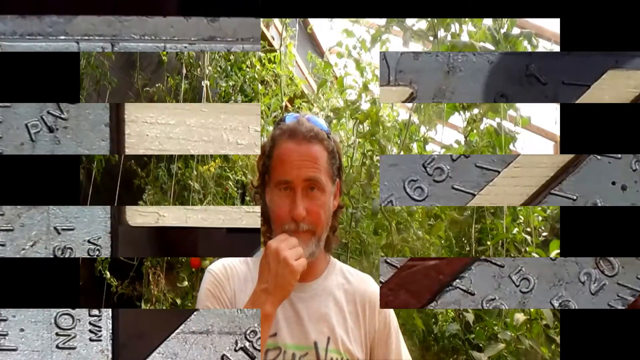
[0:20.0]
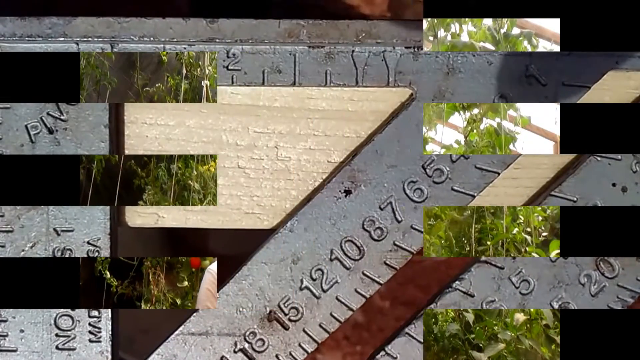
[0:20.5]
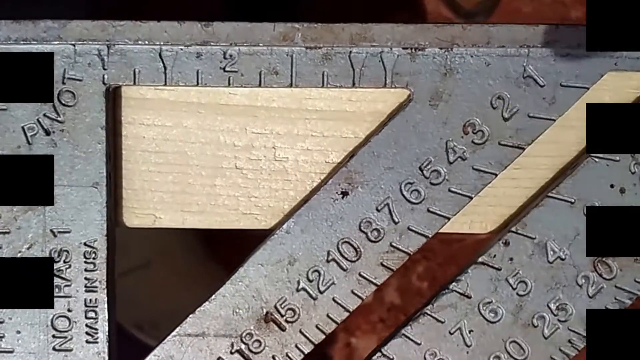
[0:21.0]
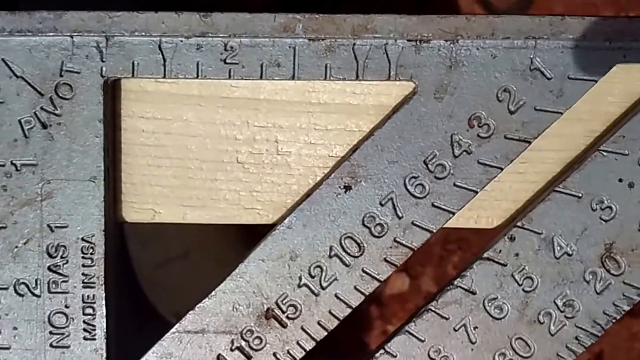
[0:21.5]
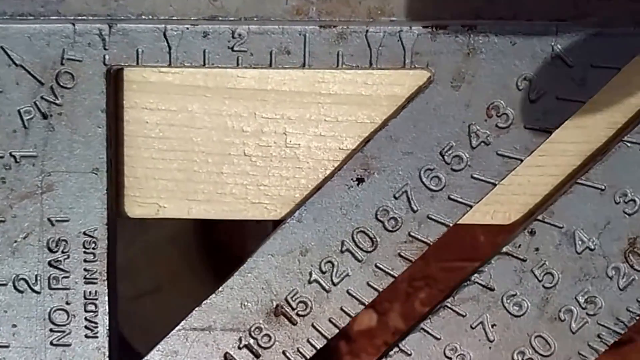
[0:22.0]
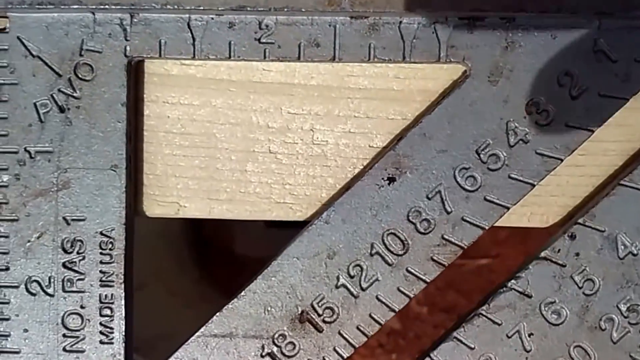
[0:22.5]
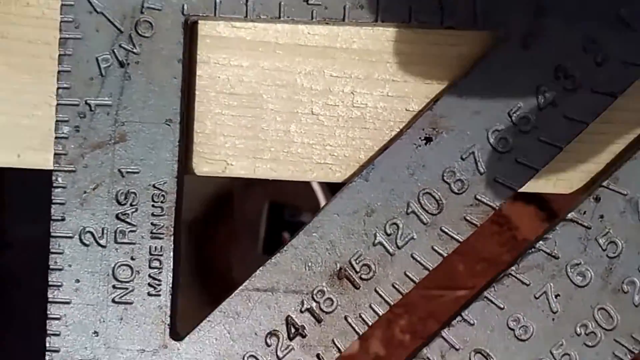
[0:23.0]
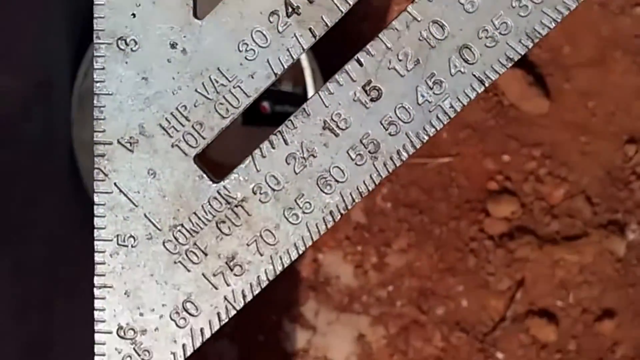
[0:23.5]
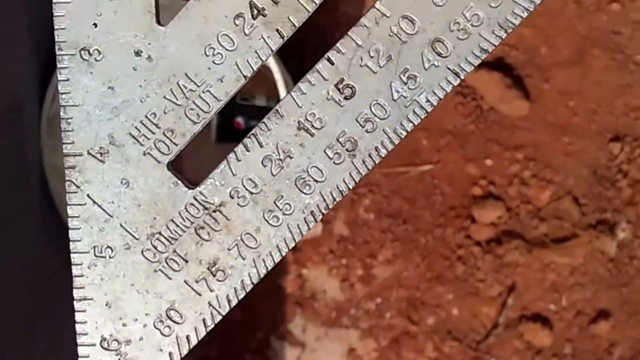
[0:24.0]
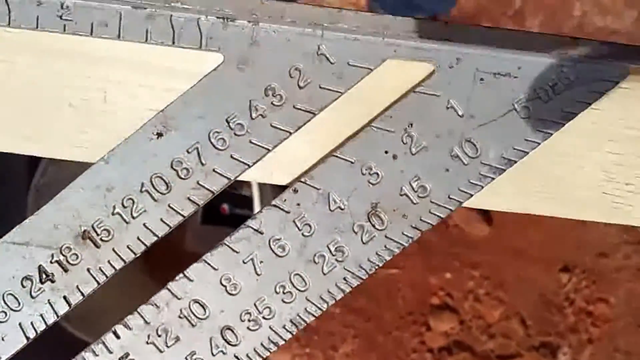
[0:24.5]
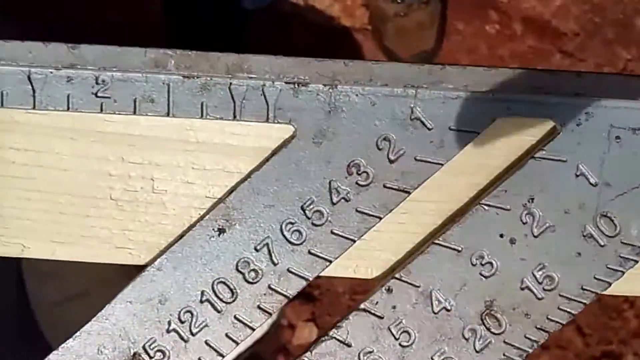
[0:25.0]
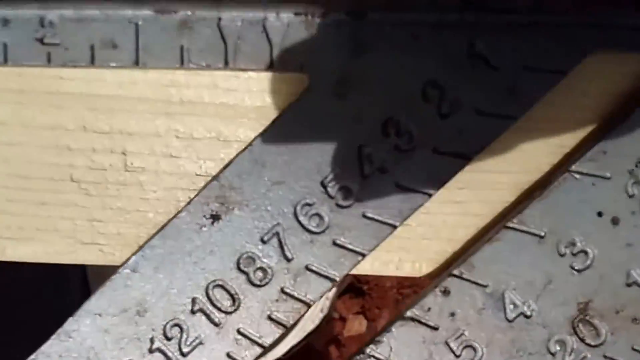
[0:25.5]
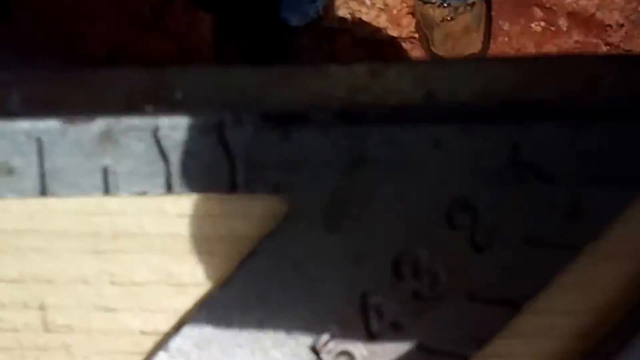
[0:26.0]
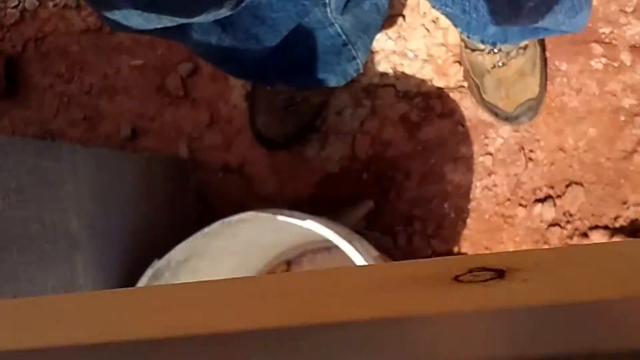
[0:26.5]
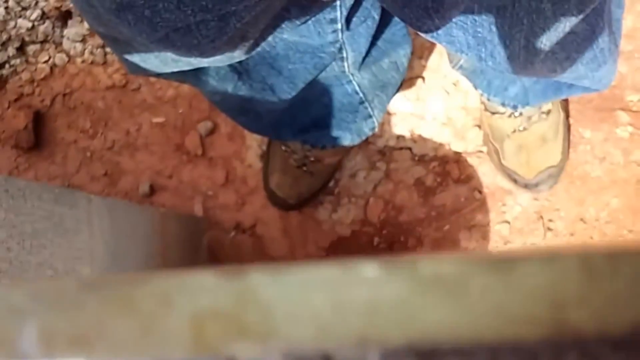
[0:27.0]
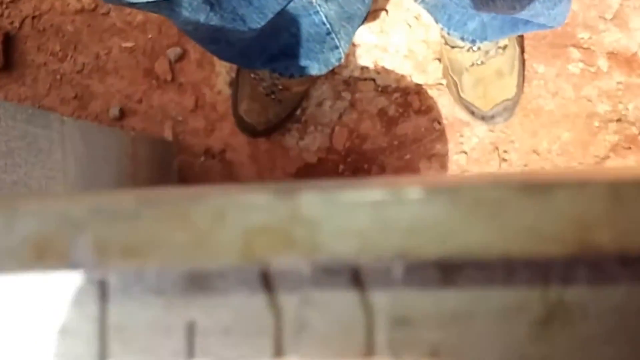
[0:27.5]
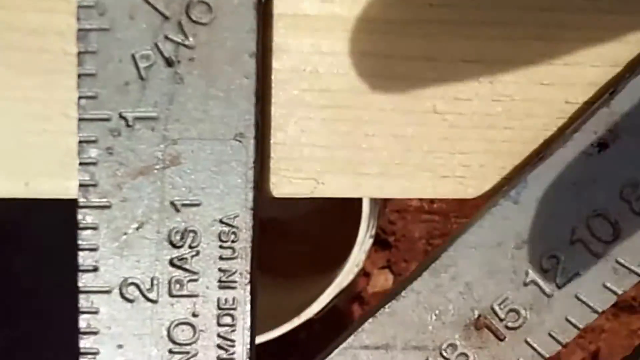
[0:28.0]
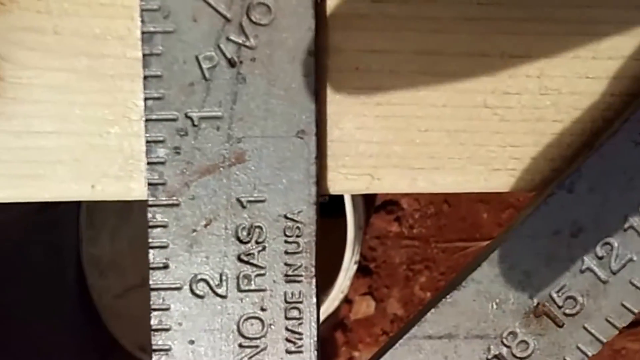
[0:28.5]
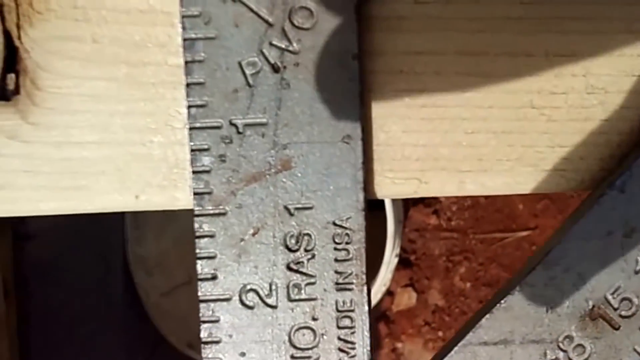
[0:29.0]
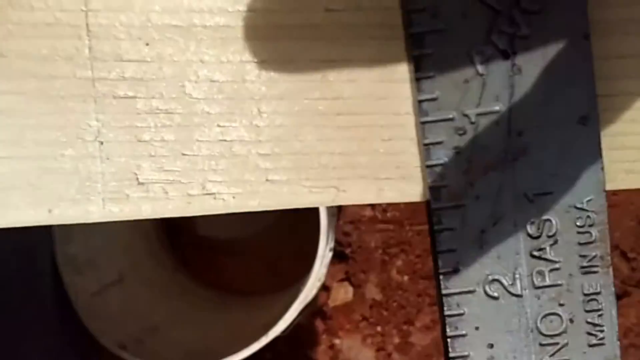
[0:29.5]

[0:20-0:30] The man appears wearing a white shirt, with sunglasses on top of his head. One of his eyes seems misaligned, looking to the right-hand side while he looks forward, and he has his hand across his beard. The video then cuts to footage of two men outside holding a metal triangle ruler as they try to cut a piece of wood.